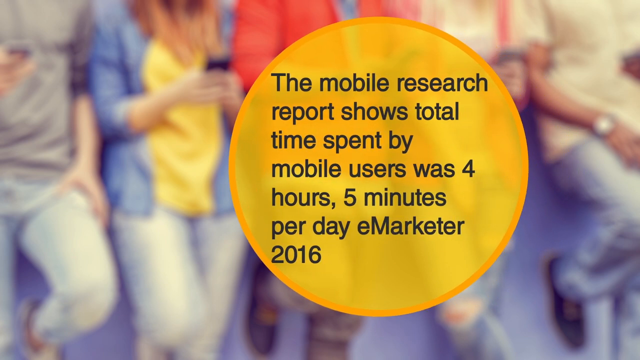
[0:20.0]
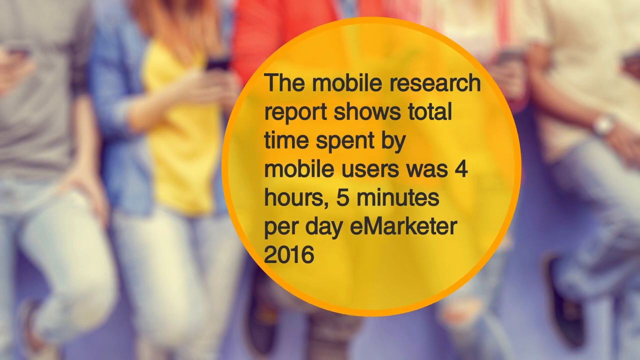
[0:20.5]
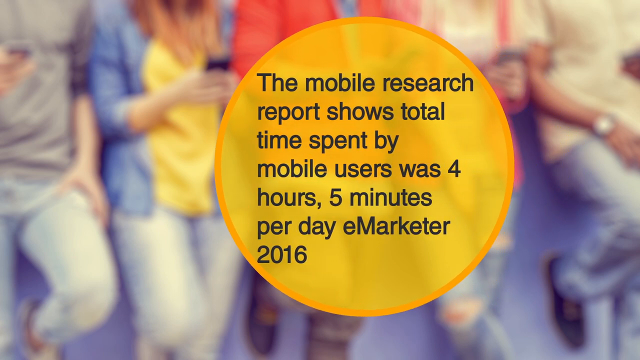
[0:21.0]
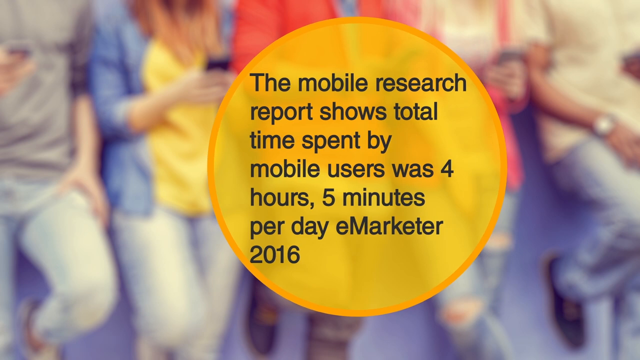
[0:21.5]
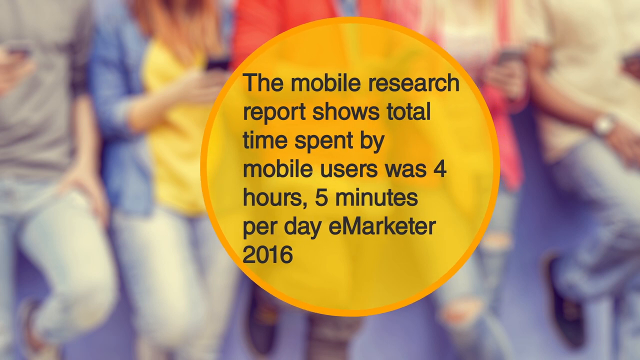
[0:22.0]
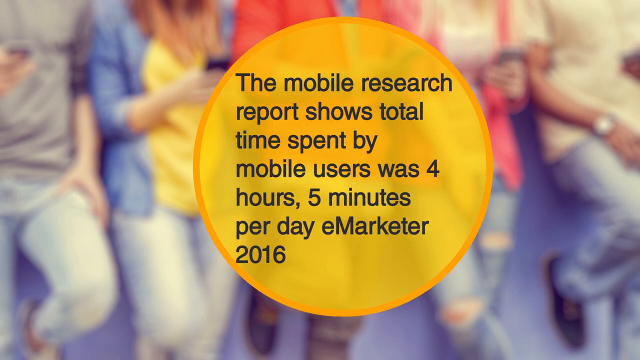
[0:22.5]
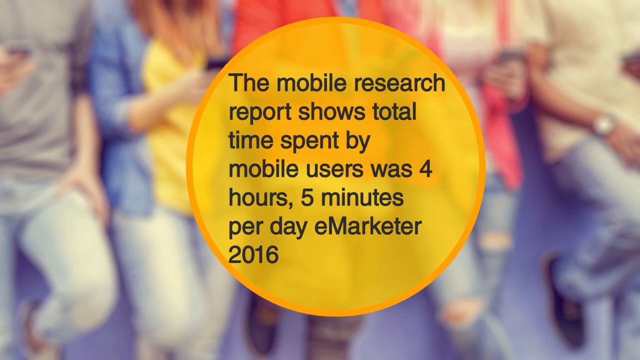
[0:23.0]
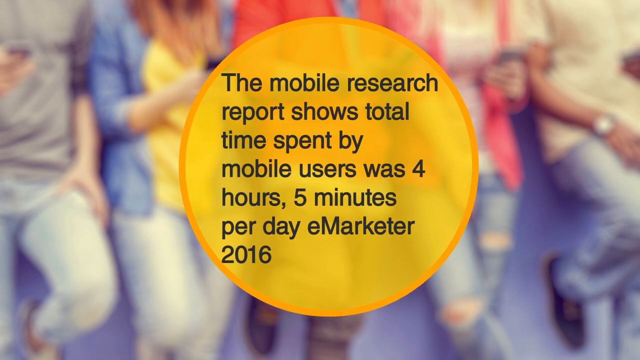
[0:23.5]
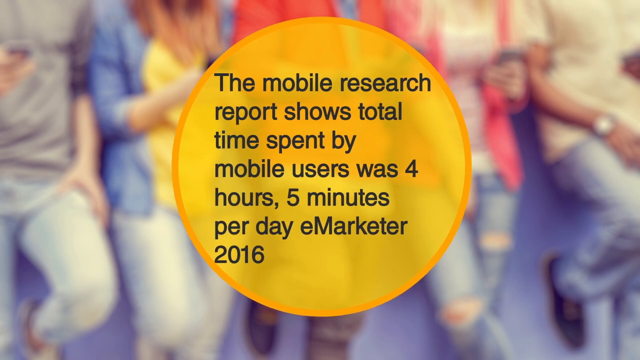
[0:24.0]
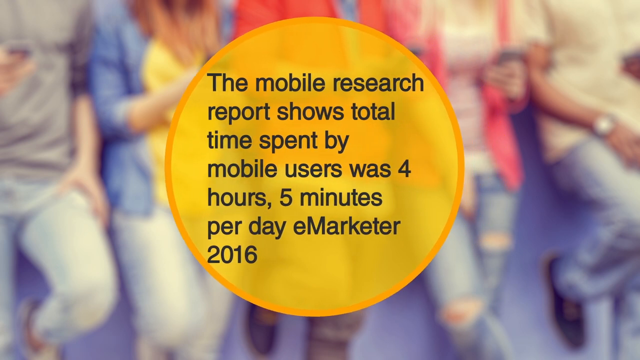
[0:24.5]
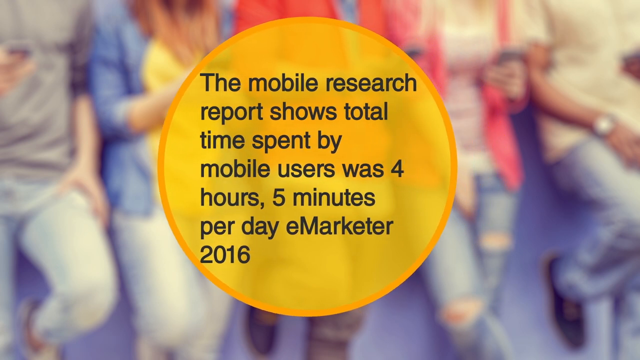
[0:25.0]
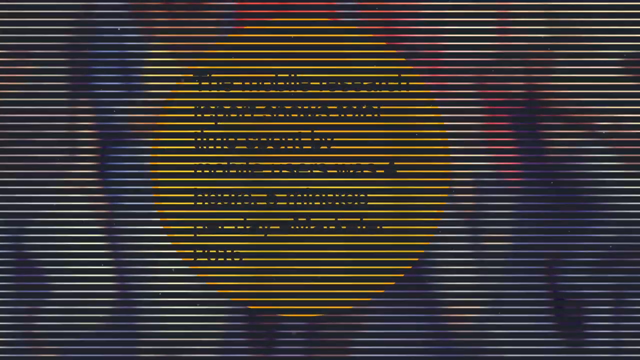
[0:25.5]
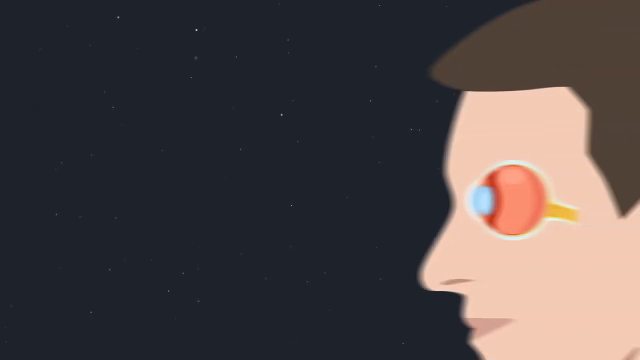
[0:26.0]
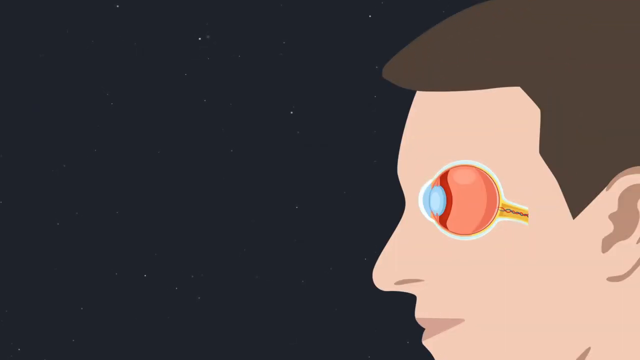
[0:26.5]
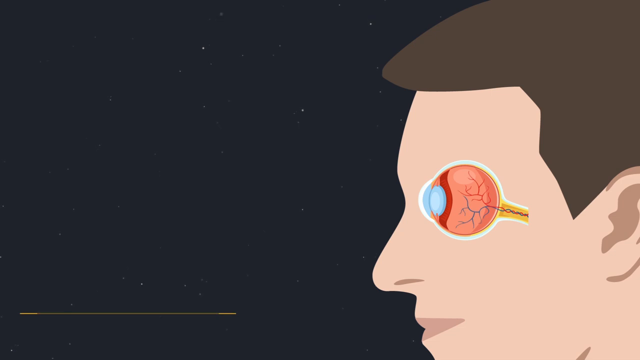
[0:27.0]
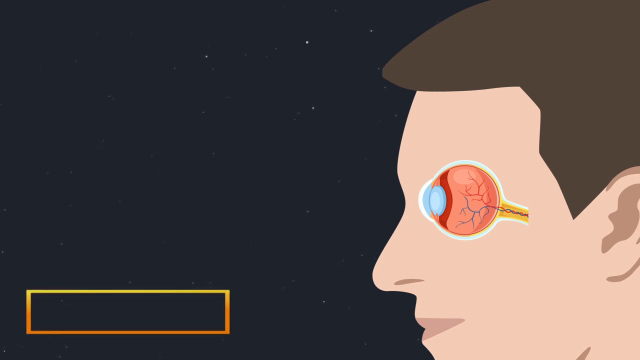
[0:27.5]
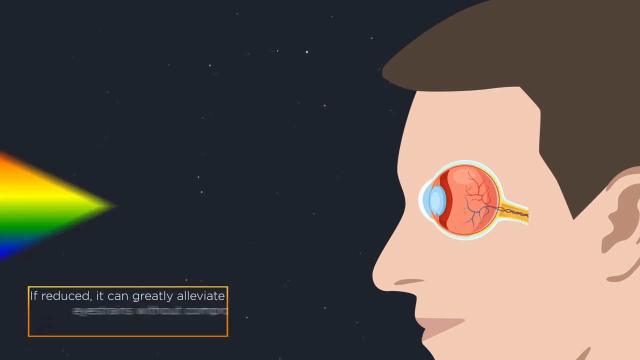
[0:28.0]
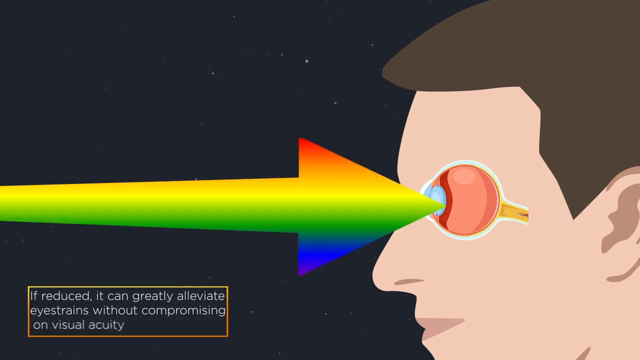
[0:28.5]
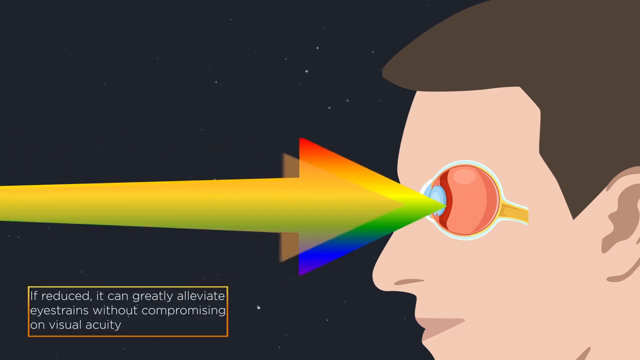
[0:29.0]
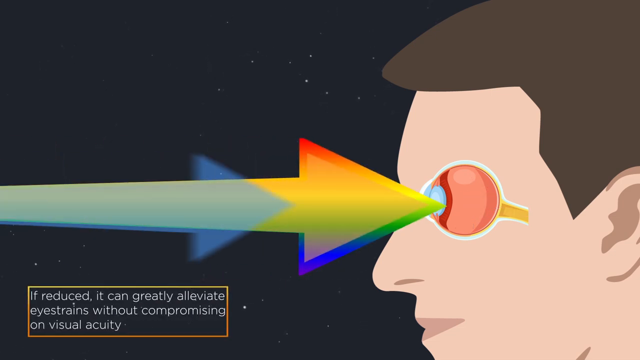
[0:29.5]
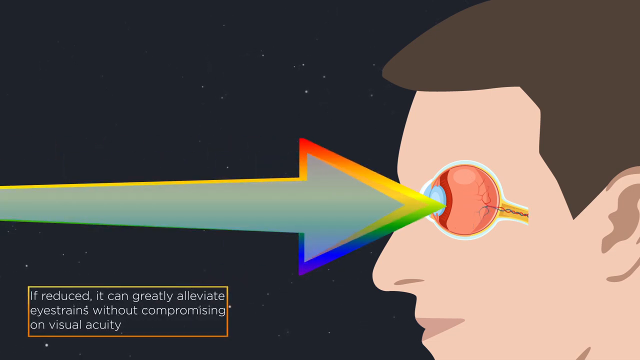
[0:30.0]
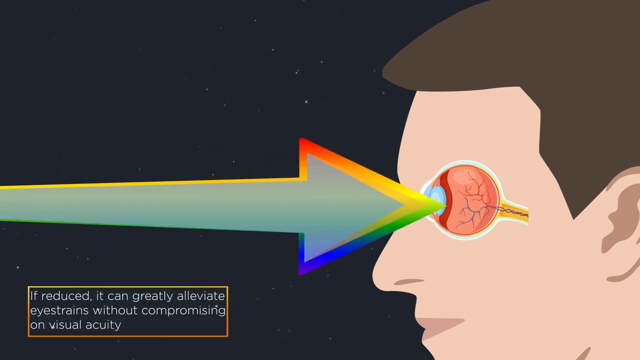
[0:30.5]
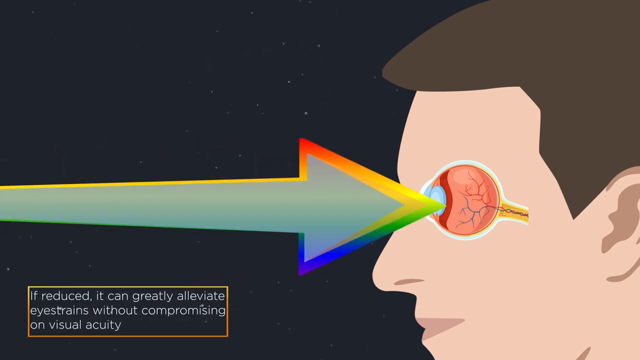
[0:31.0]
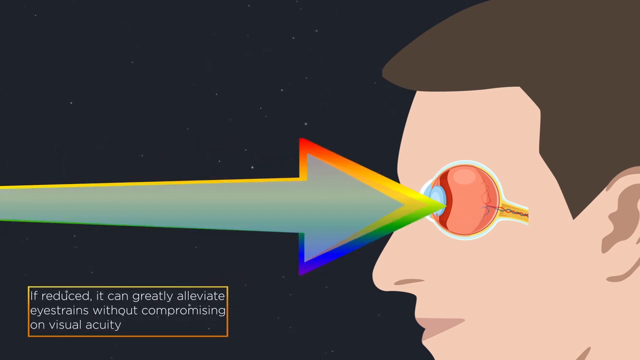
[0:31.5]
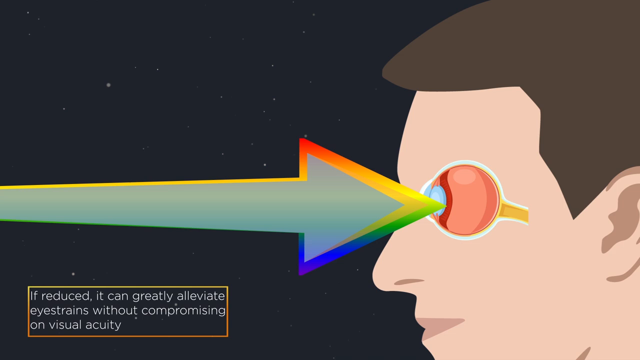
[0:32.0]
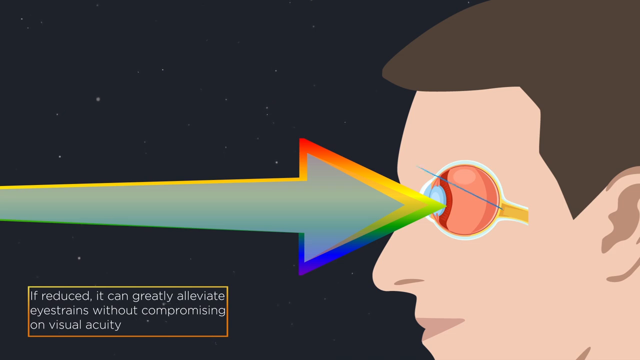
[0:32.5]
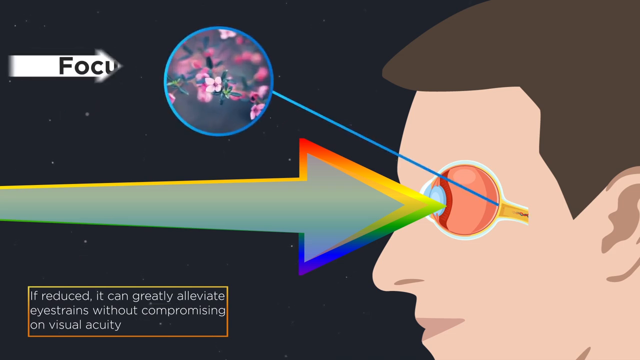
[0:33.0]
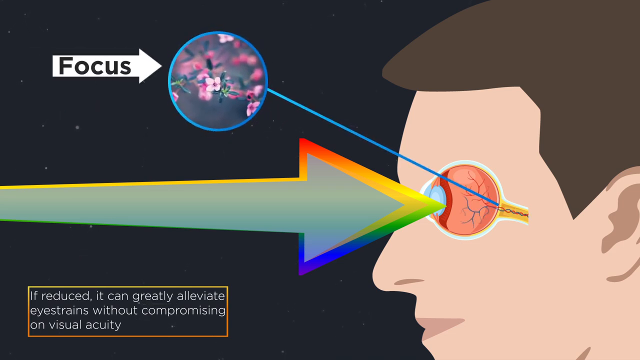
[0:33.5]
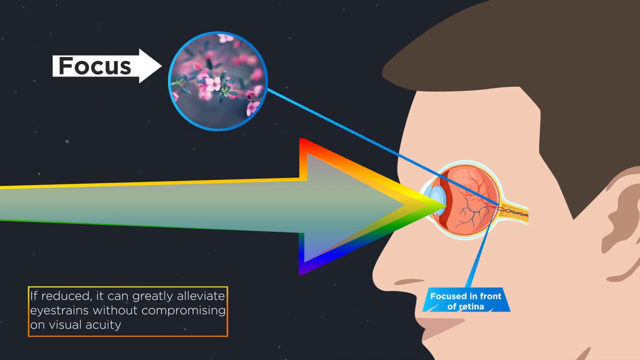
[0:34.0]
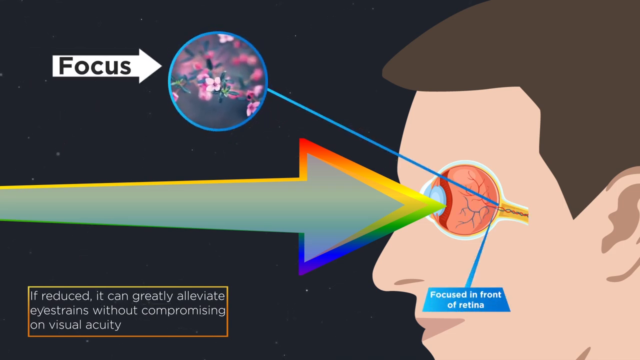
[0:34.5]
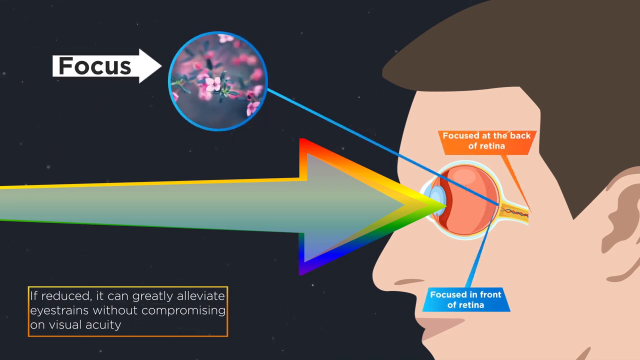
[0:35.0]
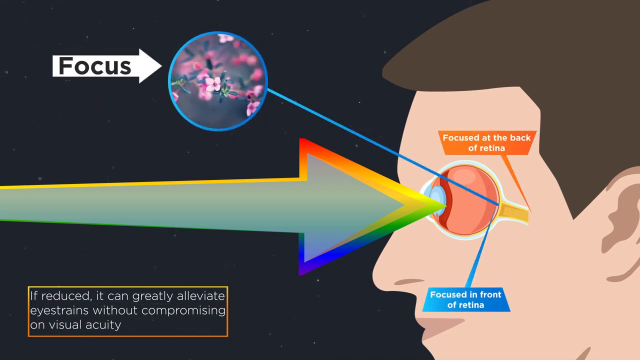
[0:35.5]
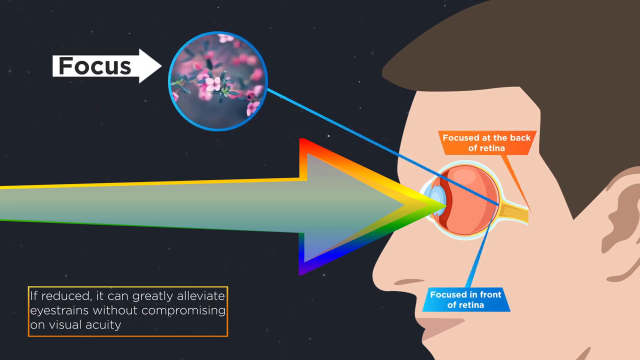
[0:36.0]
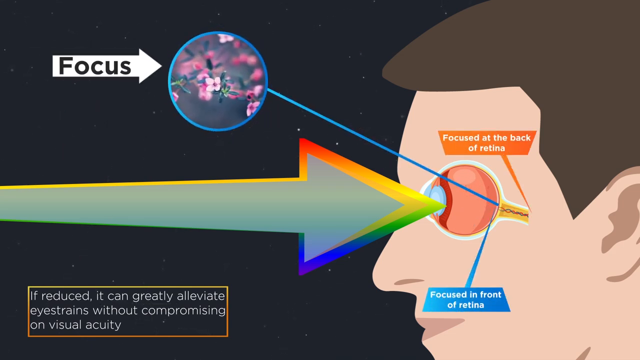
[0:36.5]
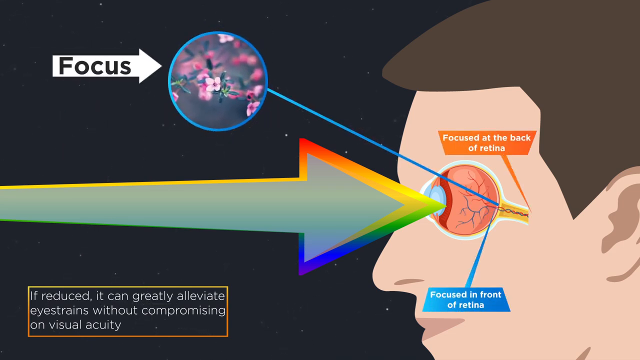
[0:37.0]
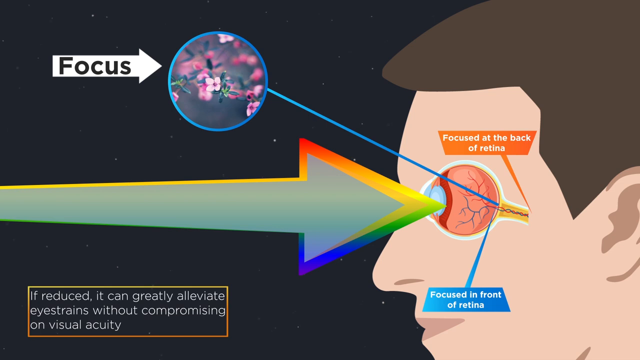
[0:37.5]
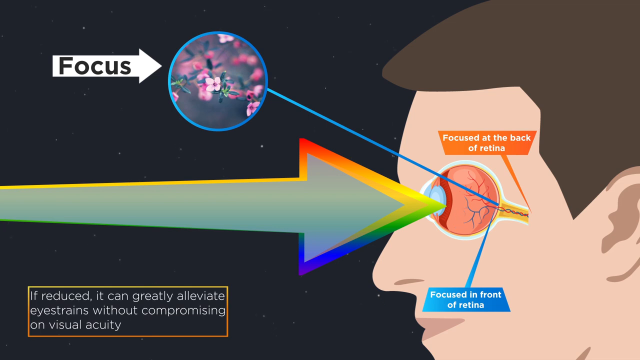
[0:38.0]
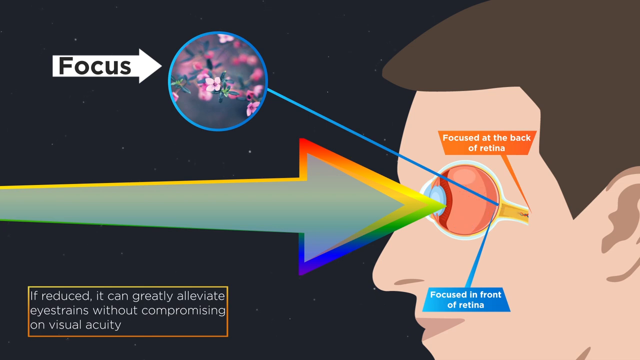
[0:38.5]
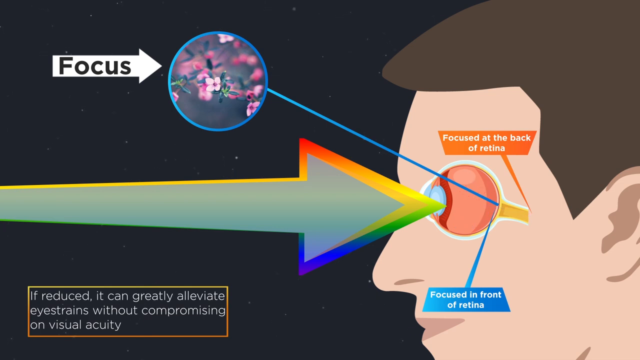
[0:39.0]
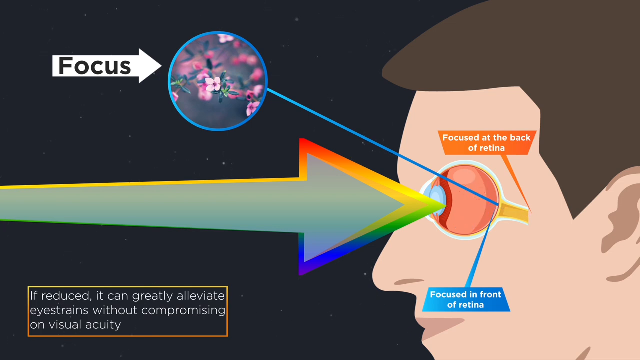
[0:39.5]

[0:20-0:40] A blurry image shows four to five people side by side; one is dressed in a colorful red sweater and another in a yellow t-shirt underneath a denim shirt. A large yellow circle with black text across it reads "the mobile research report shows total time spent by mobile users was four hours five minutes per day eMarketer 2016", and it slides slowly from the right side of the frame to the left. The screen then transitions to a graphical illustration of the side view of a person's head, showing details of the eyeball, including its blue lens, and the nerves and blood vessels. A spectrum of light projects into the eyeball in the form of an arrow; the arrow is yellowish, with rainbow colors at its point. More arrows are layered in gray and other colors. The illustration also shows how the eyeball functions and focuses.